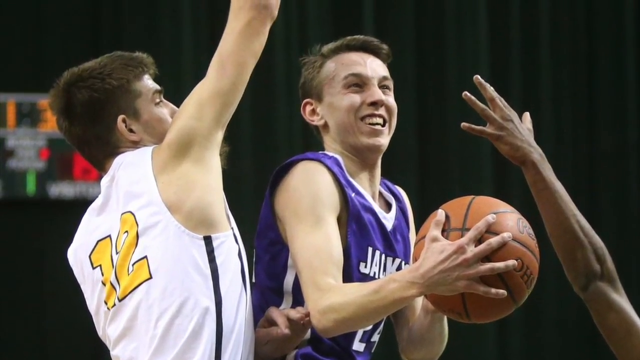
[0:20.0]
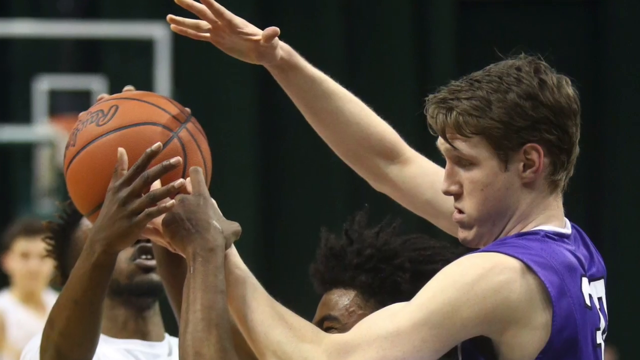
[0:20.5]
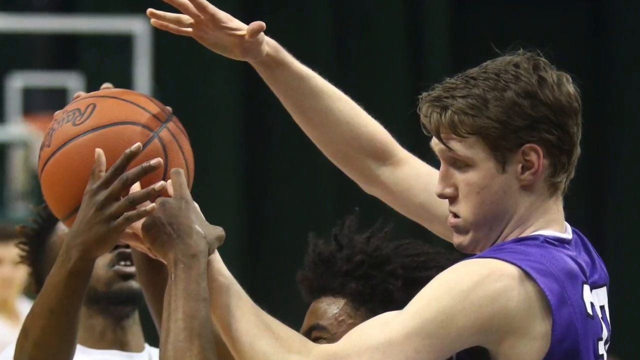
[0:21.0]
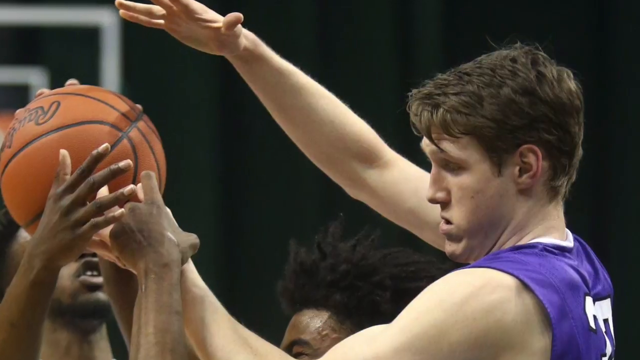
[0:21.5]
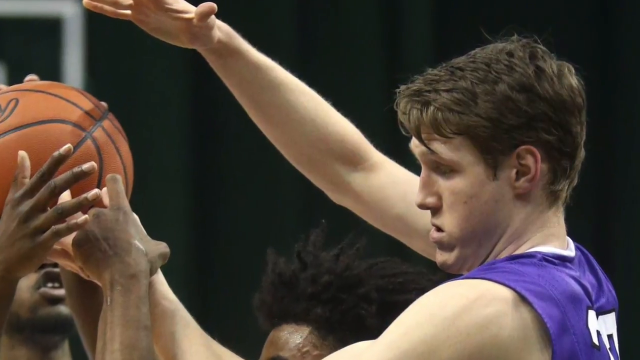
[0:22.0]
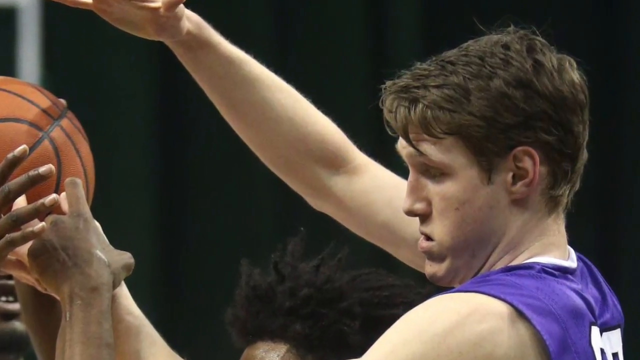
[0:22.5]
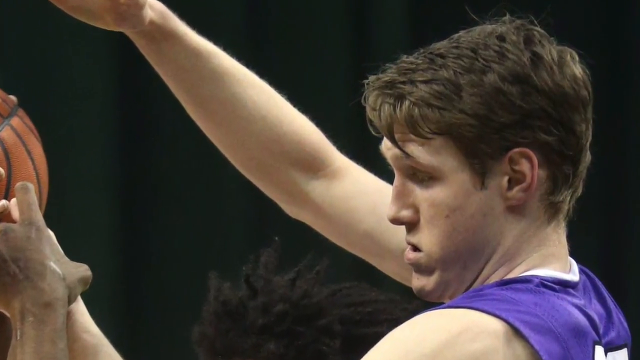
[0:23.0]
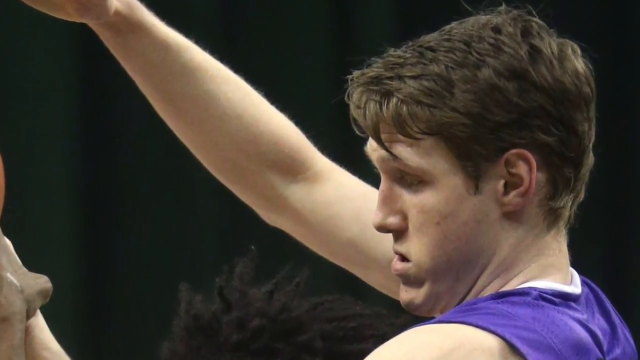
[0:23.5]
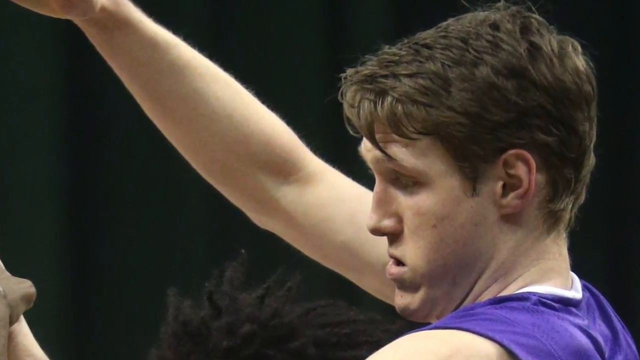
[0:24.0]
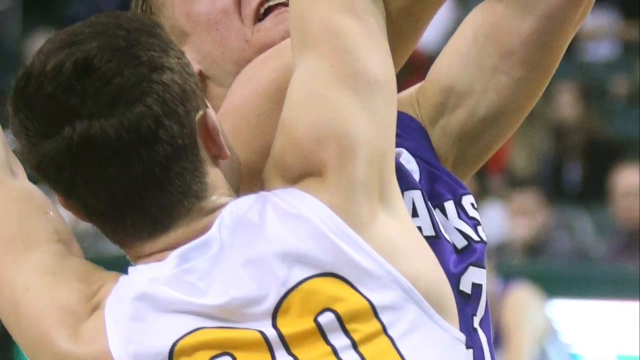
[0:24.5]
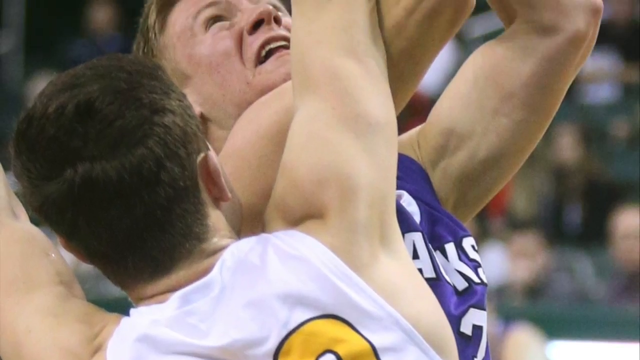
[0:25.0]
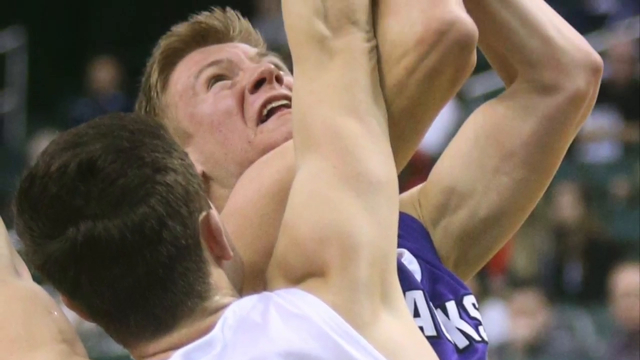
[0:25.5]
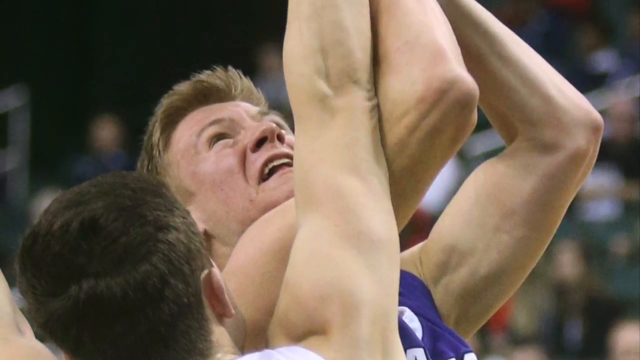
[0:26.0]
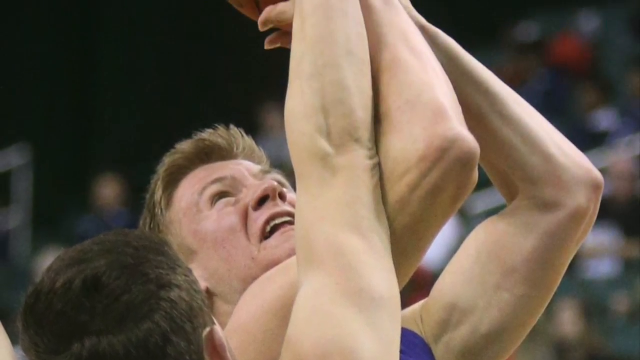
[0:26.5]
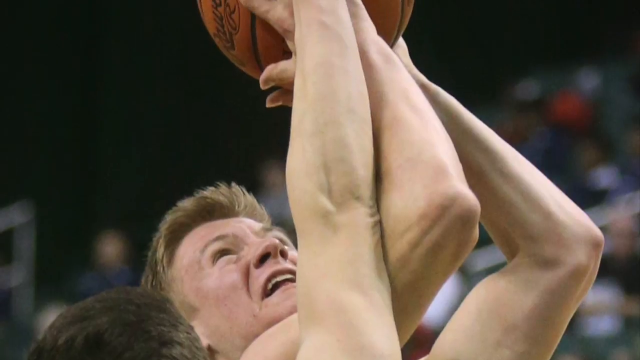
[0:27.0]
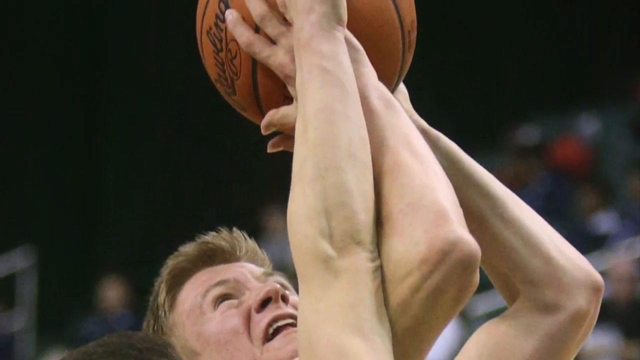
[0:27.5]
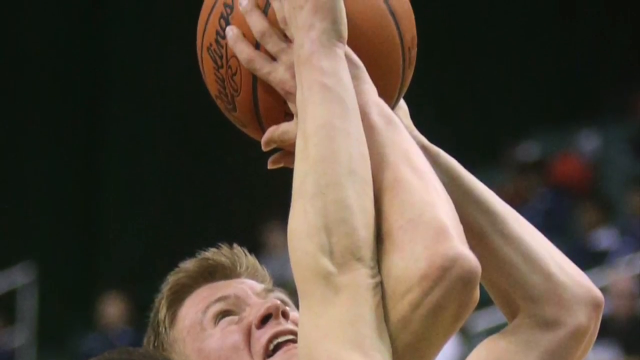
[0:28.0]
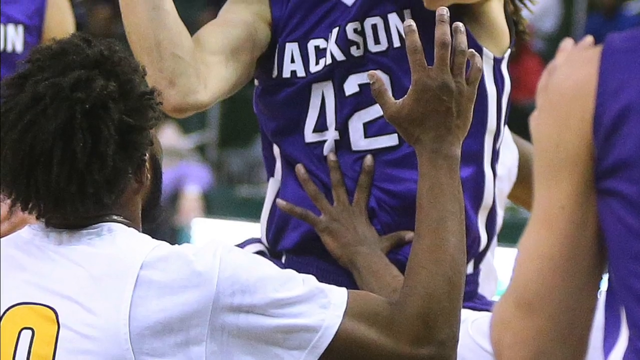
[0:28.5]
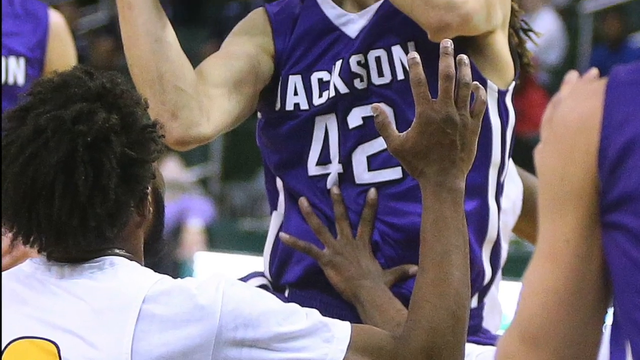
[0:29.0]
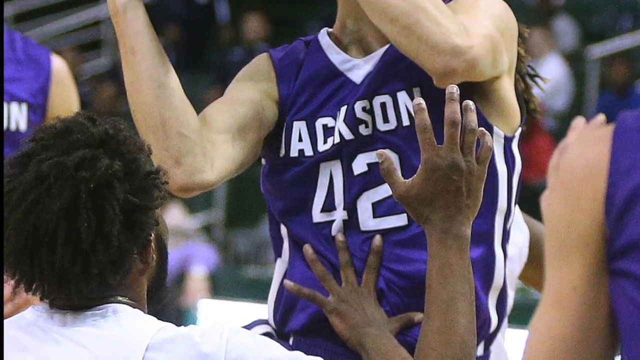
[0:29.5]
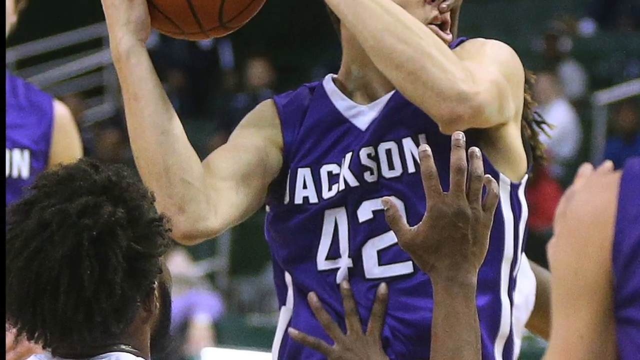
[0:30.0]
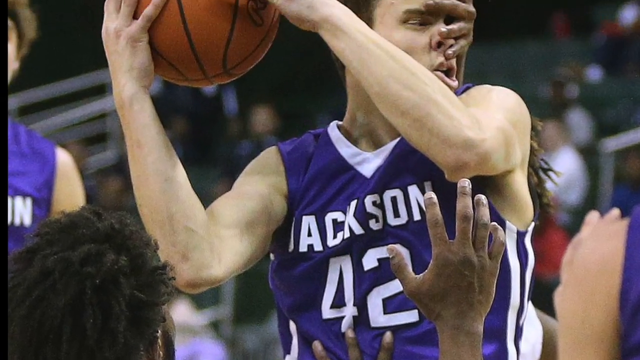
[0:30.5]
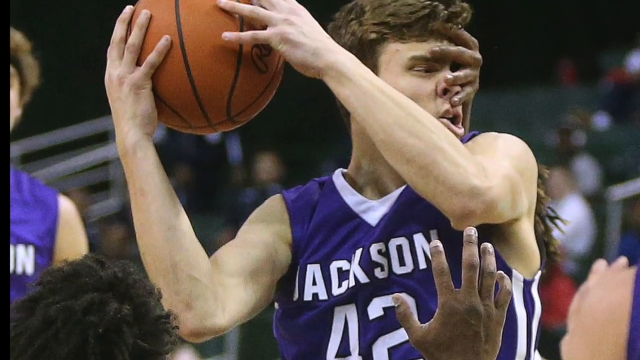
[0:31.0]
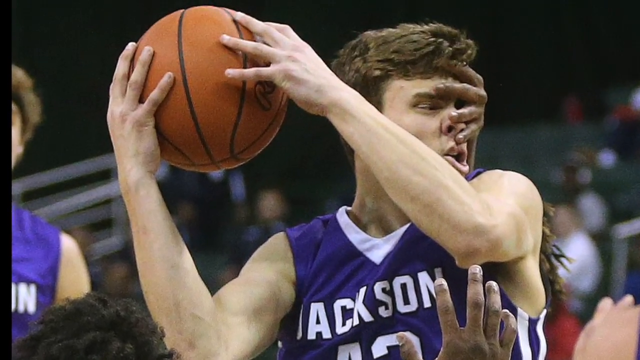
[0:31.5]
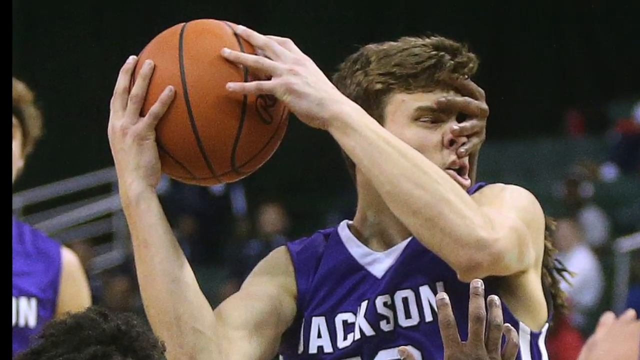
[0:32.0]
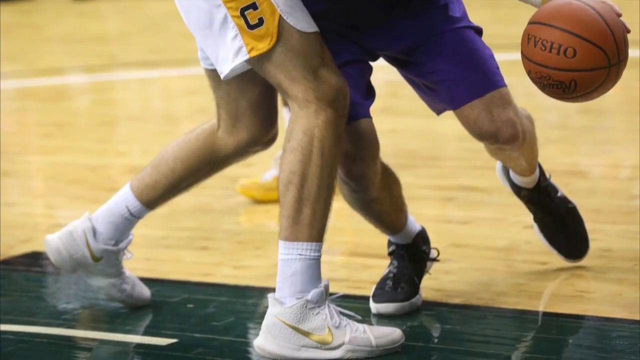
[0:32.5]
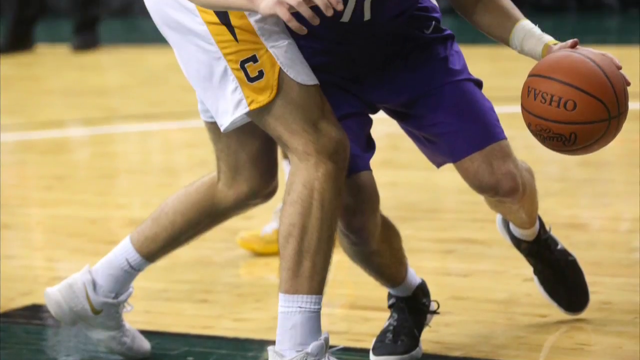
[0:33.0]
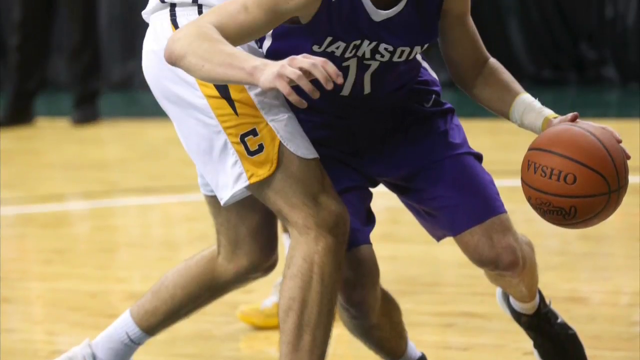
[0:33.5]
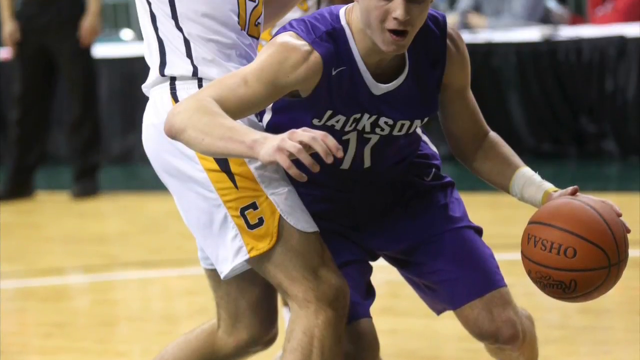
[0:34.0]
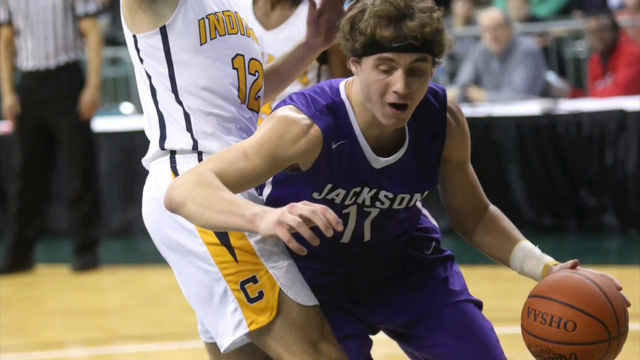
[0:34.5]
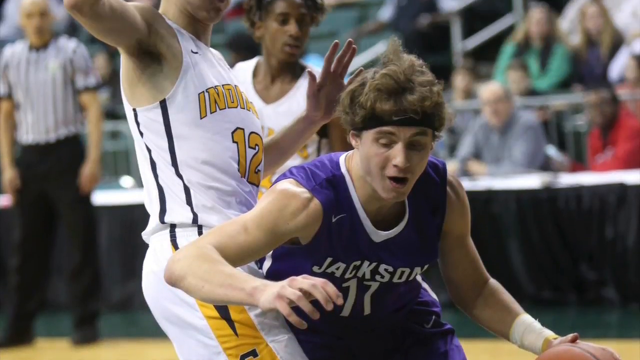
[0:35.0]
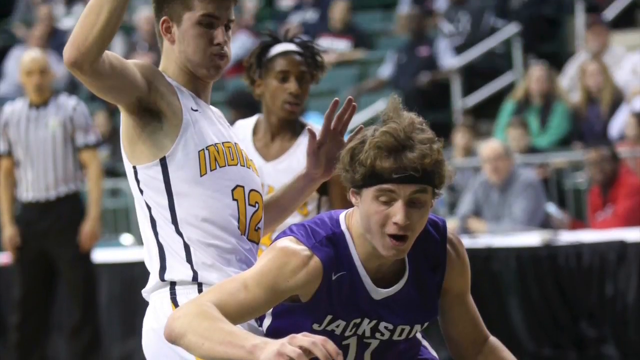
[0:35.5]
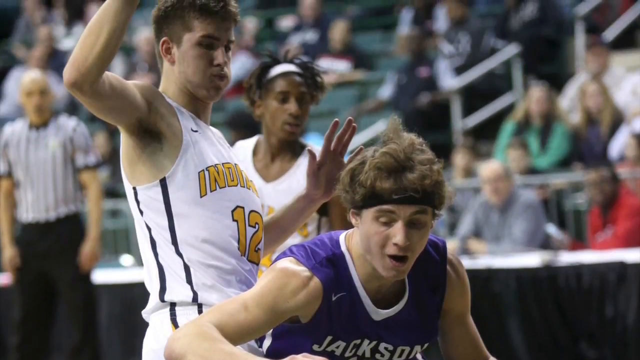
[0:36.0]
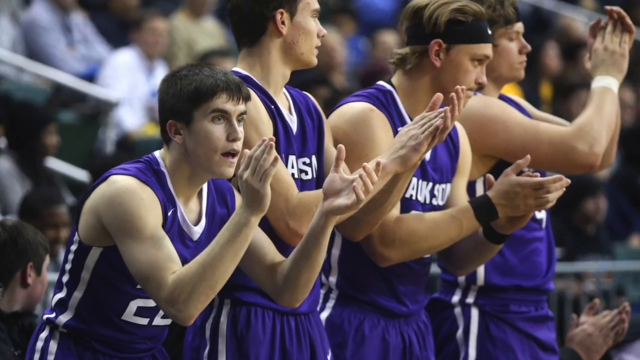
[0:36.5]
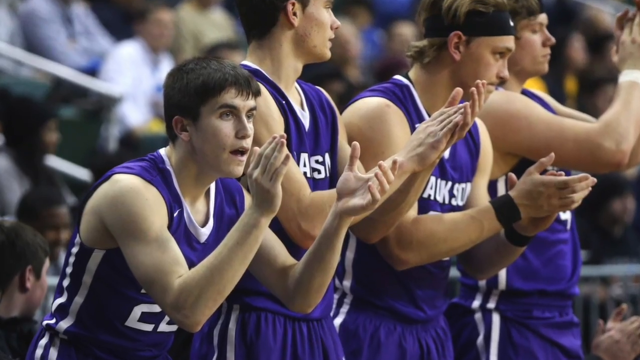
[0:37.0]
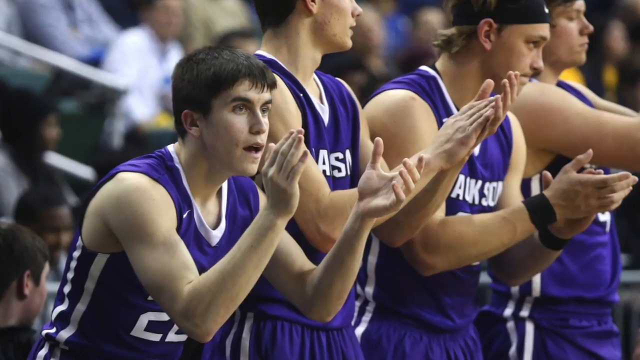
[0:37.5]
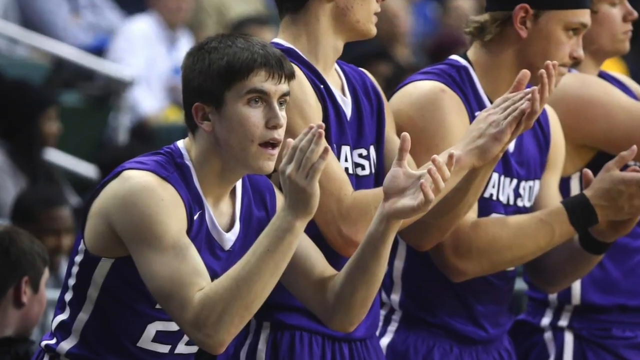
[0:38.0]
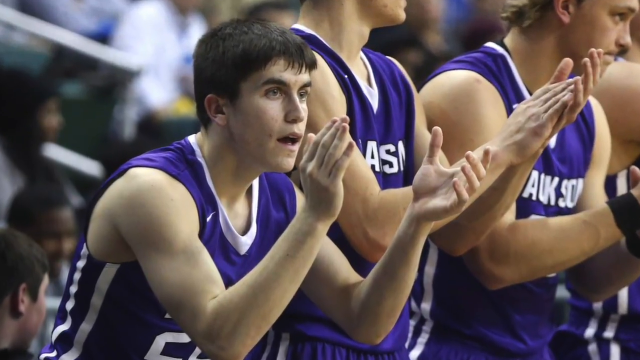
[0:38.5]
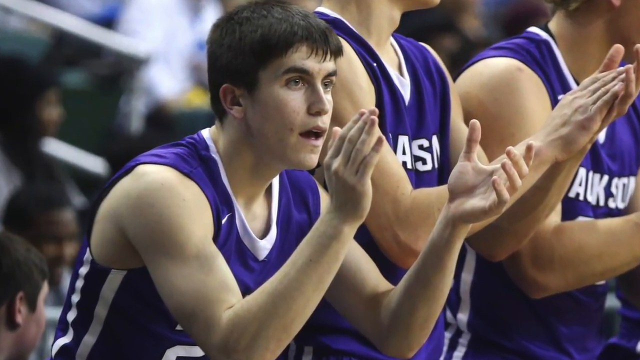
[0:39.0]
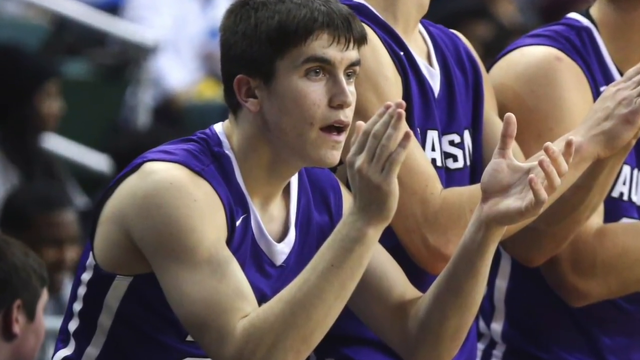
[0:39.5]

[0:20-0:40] In the next picture, a player in purple on the right has his left hand on the ball and his right hand coming up from above; he looks to be fighting for the ball with another player, of whom only the face and hands are visible. The ball looks to be just above his head. The camera zooms in on the purple player's face, showing brown hair. Another picture shows the back of a player in white and a player in purple with sort of blondish red hair who looks to be jumping up for a shot, their forearms touching as if he might be fouled. Another shot shows a Jackson player up in the air with the ball and a hand around his face, four fingers all over it: the middle finger right above his eye, the ring finger on his nose, and what looks like an index finger right below his nose, leaving his face a bit distorted. Next, Jackson's number 17 holds the ball in his left hand, with tape on his left wrist, guarded by number 12 in white; he is bent over, dribbling. Then a still picture shows four players in purple on the sidelines, all clapping.